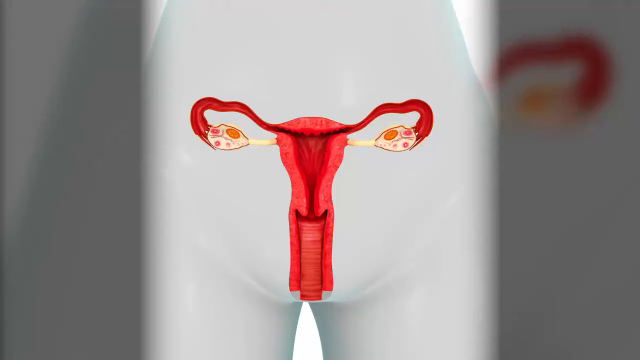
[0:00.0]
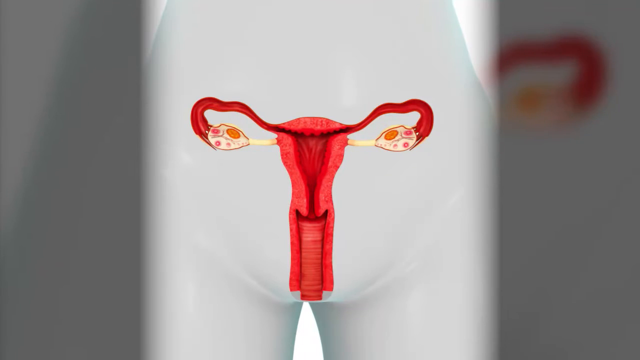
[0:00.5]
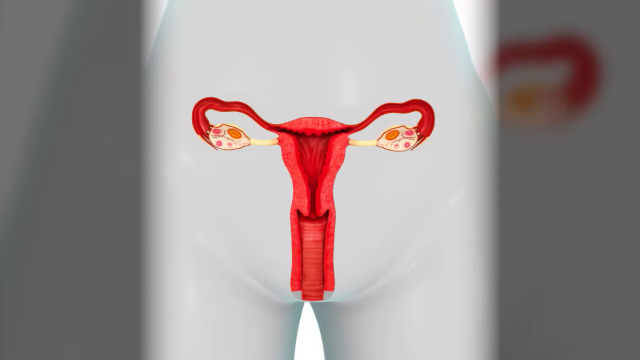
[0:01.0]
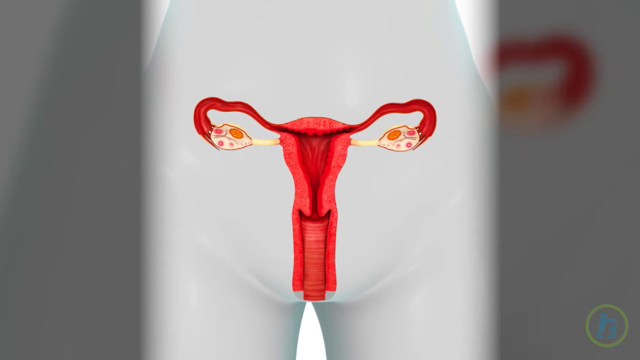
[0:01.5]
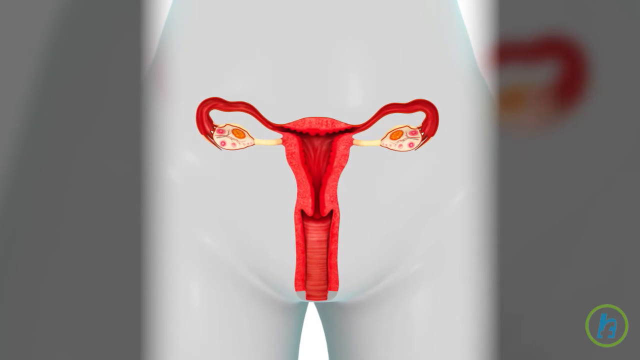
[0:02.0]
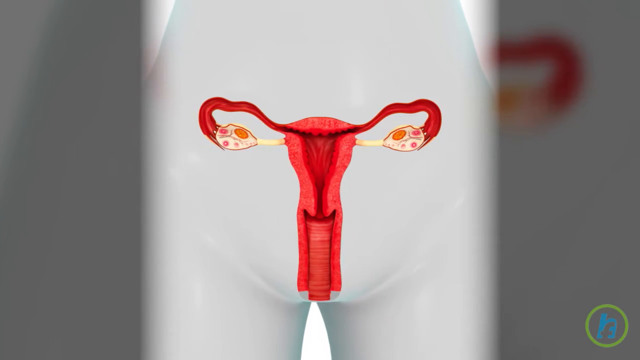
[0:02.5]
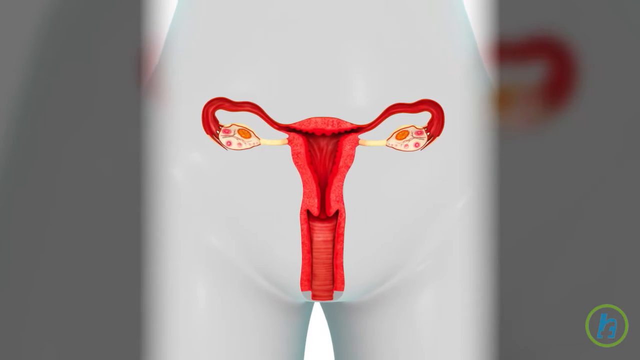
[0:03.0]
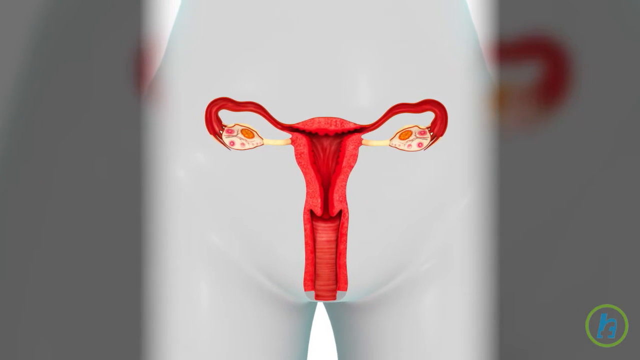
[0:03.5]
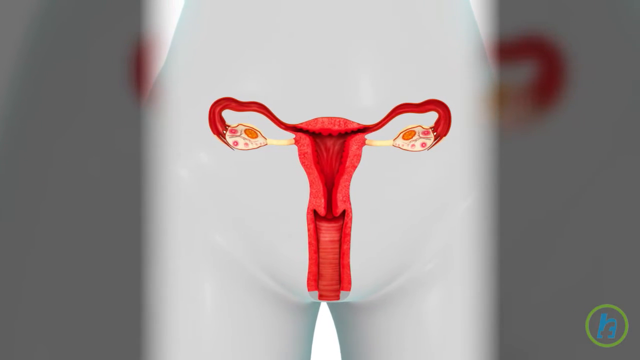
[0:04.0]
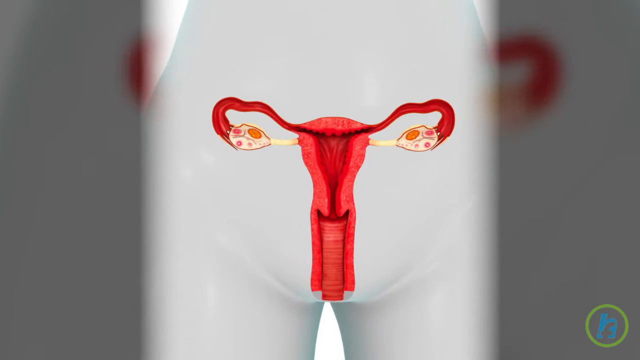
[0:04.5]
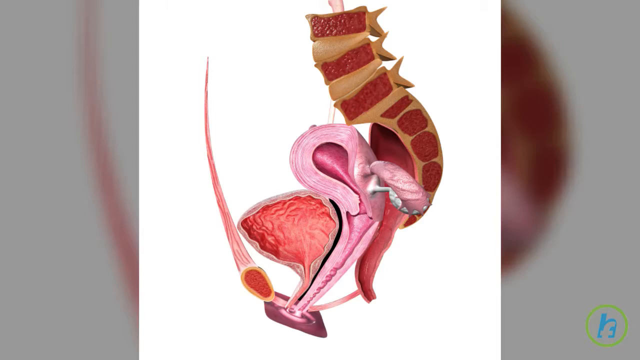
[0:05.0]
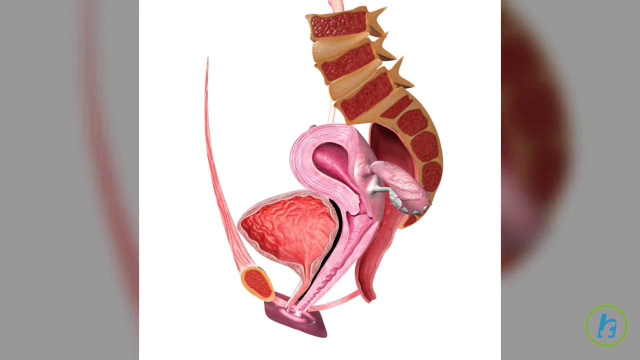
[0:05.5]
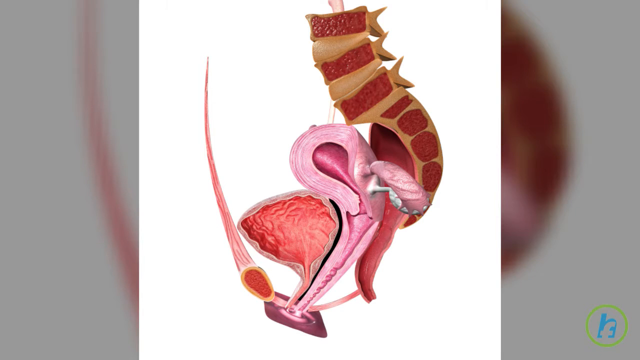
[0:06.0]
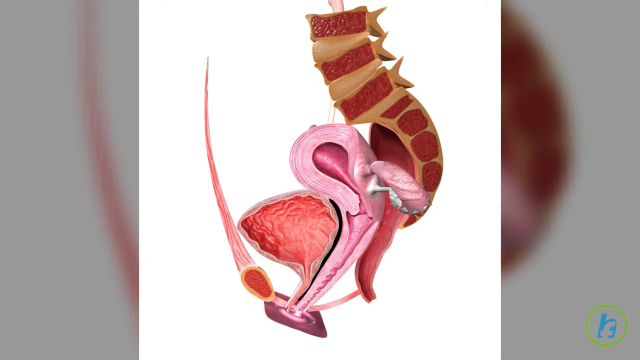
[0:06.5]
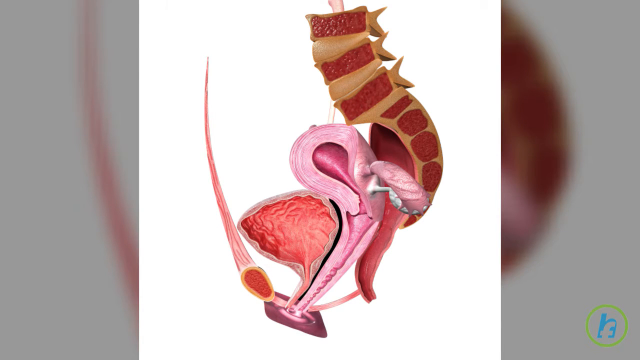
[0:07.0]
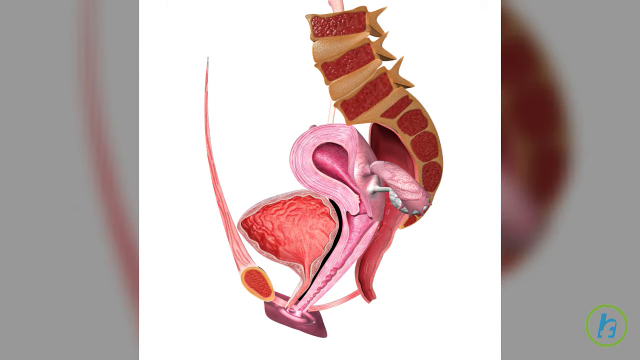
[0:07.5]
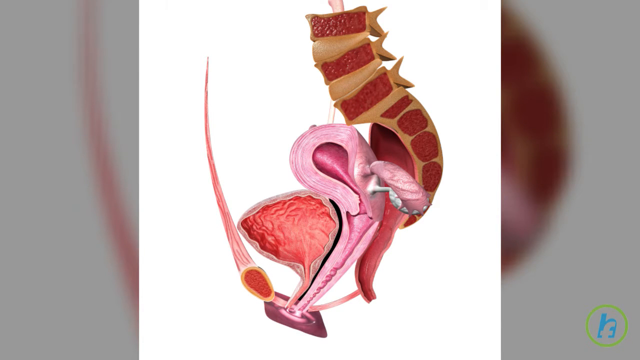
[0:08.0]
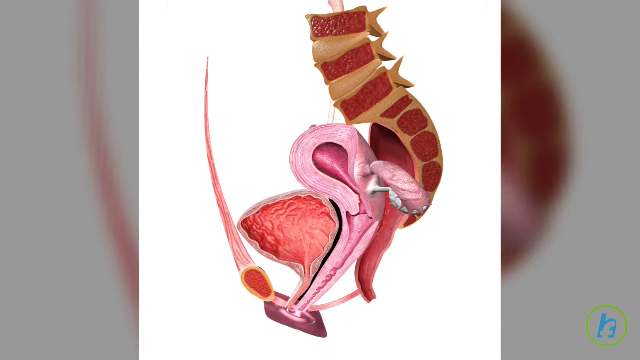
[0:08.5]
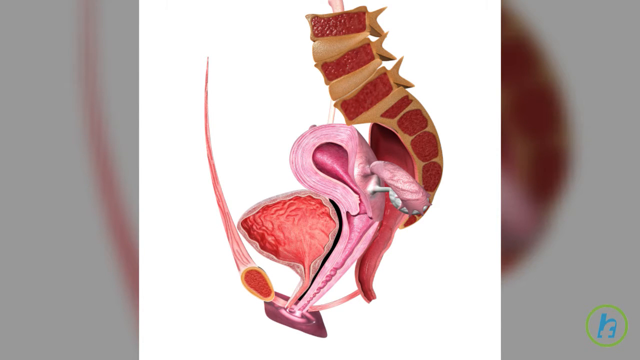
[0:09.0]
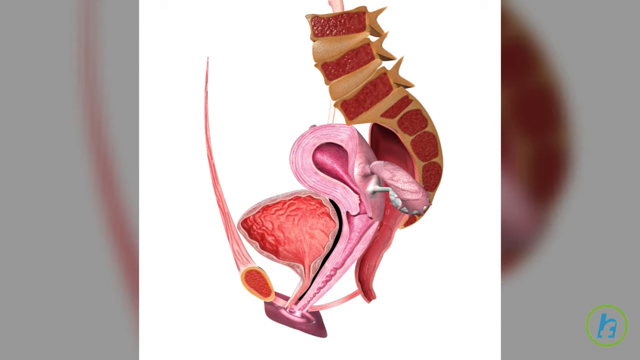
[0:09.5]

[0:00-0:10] The video opens on something that resembles bike handlebars but is actually part of the human body. There appears to be a tube in the middle, apparently the pelvis area or pelvis muscles. The middle part where excrement comes out is visible, and the parts that attach to the pelvis run horizontally in sort of a figure-eight fashion to connect to the hips.